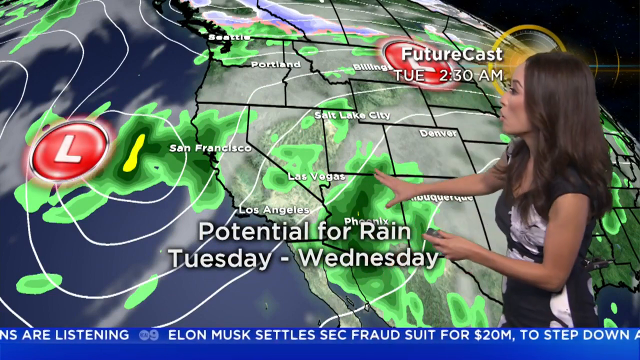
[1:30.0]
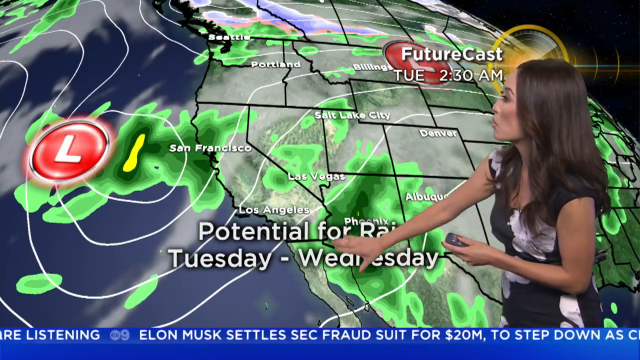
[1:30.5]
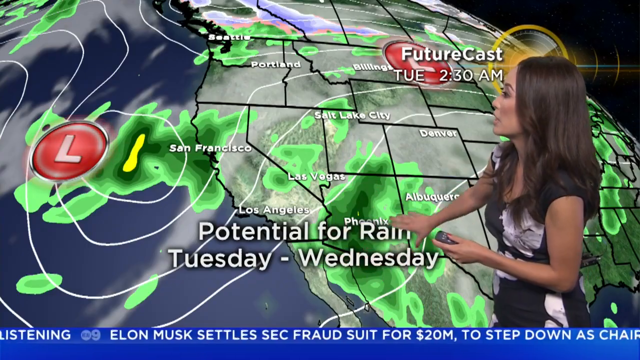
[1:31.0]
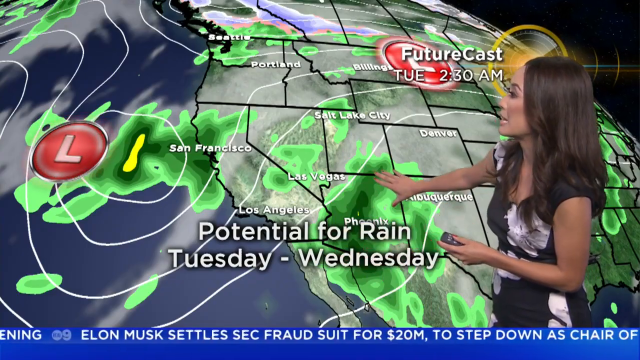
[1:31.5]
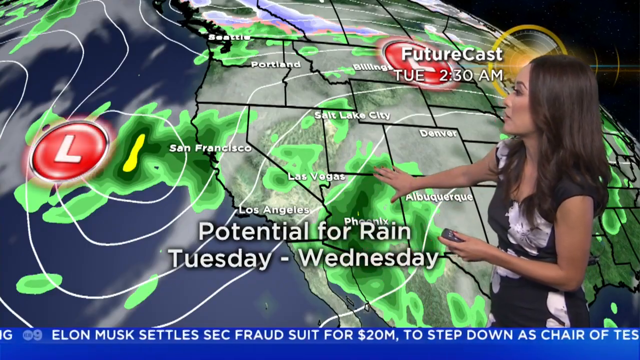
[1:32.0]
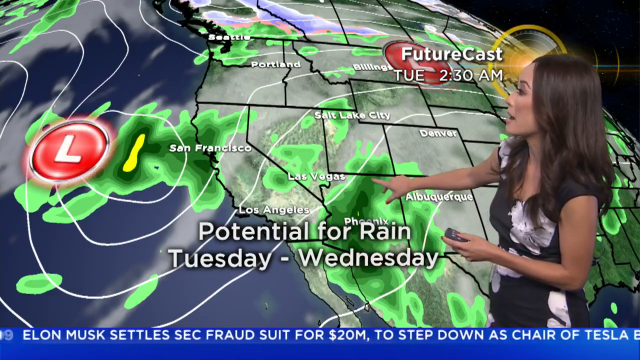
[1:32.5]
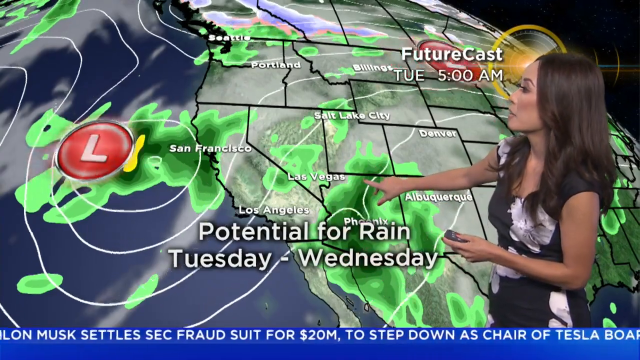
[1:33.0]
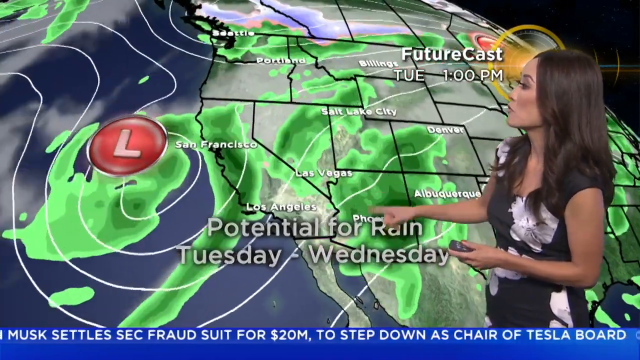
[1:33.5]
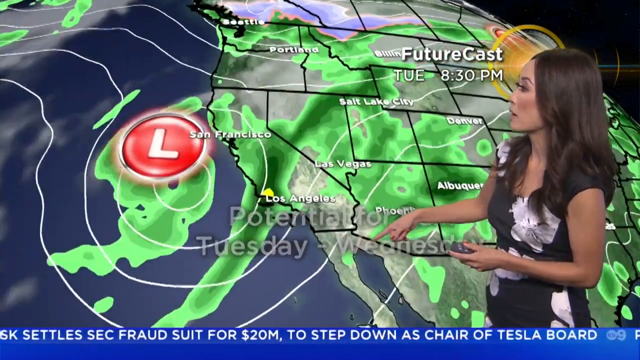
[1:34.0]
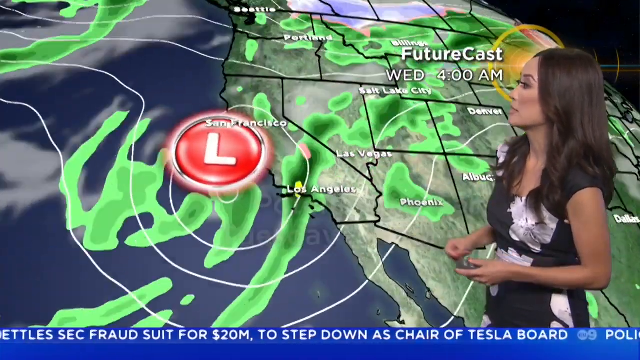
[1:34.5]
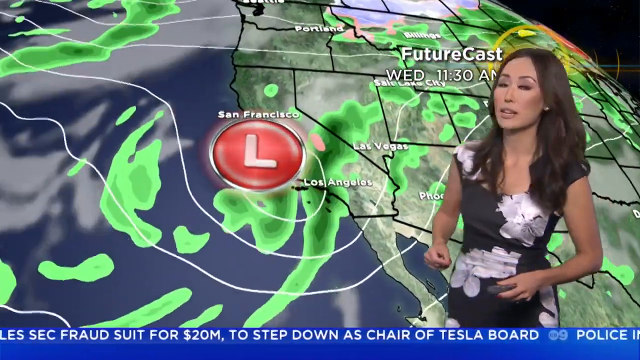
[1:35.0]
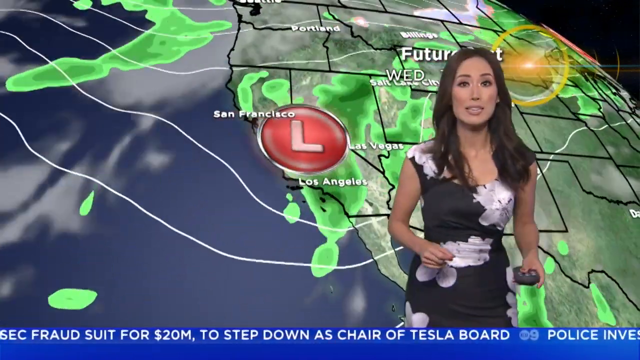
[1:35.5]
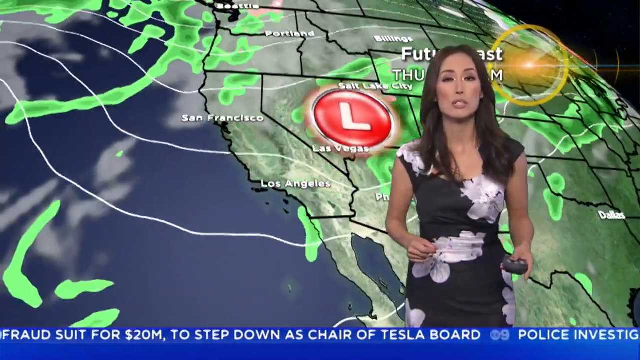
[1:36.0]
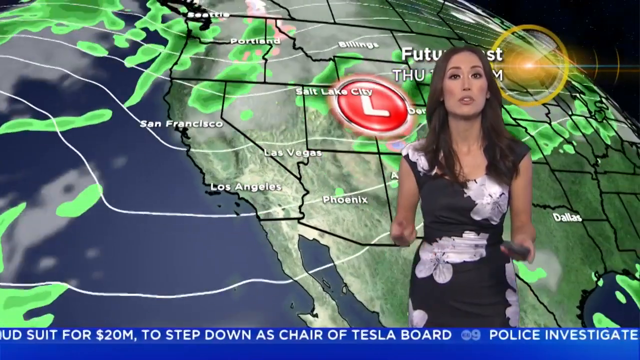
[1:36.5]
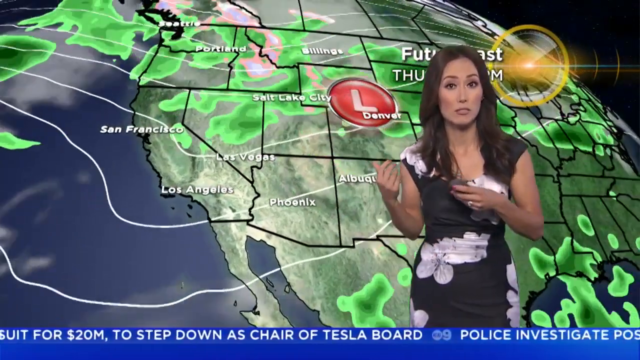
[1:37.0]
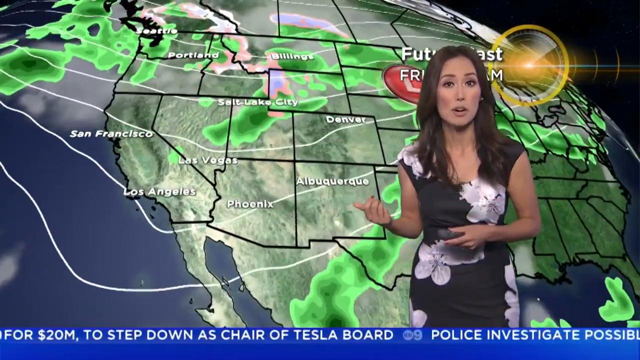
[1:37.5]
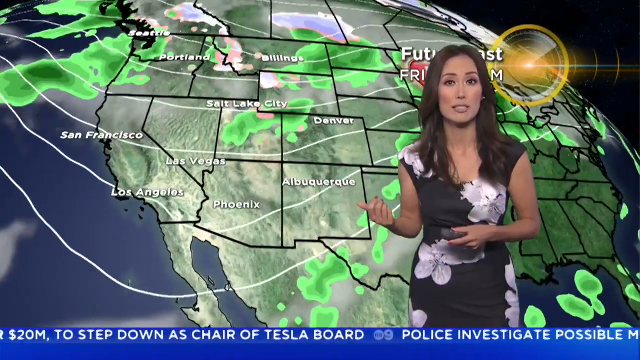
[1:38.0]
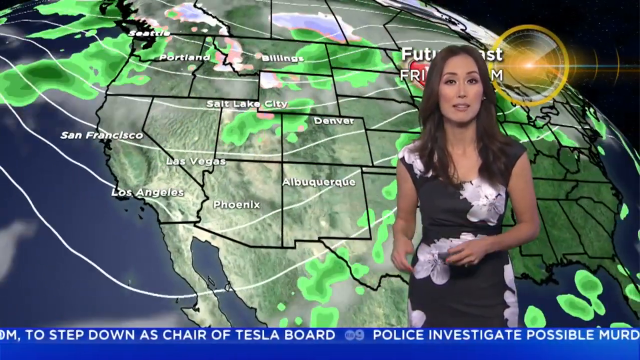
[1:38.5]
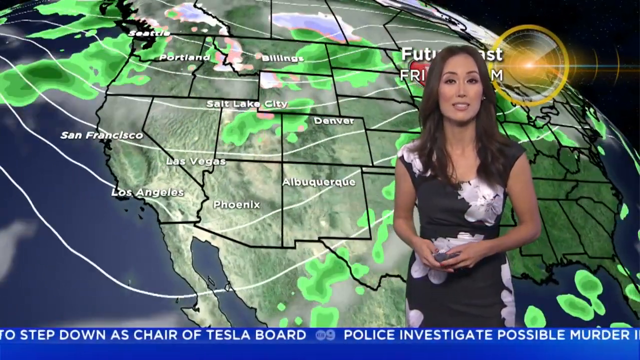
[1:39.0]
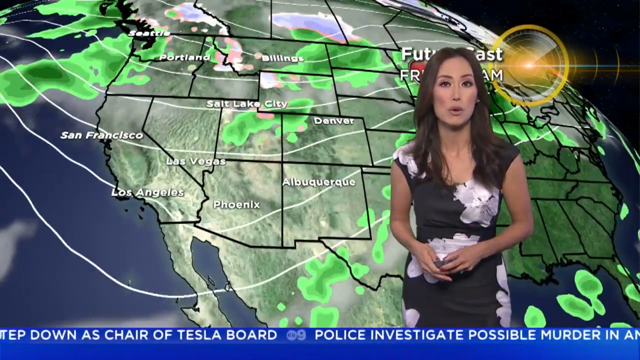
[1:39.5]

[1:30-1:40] A weather lady presents potential rain for Tuesday through Wednesday. On-screen text reads "future cast Tuesday 2 30 a.m" with "San Francisco," "Las Vegas," "Los Angeles" and "Phoenix." The weather lady has brunette hair, wears a white and black dress, looks possibly Asian, holds a little clicker in her hand and talks a lot with her hands. The view zooms in, and text refers to low pressure coming through California throughout Wednesday.